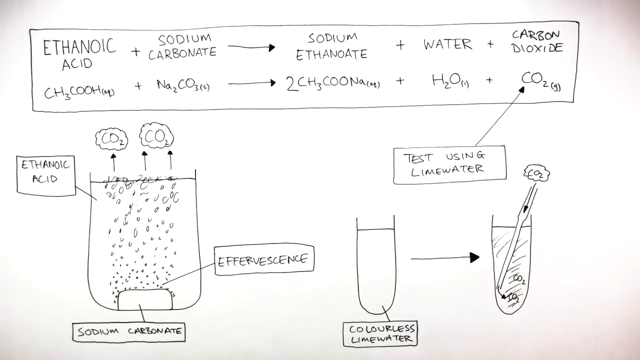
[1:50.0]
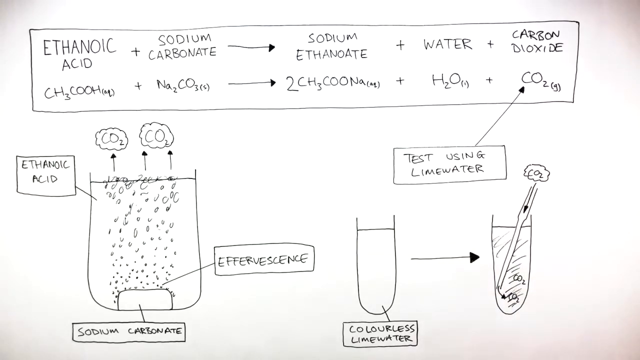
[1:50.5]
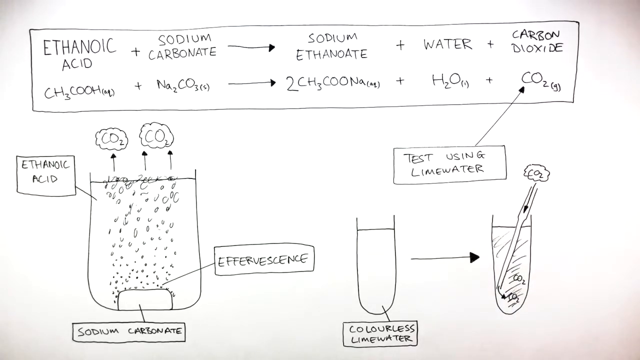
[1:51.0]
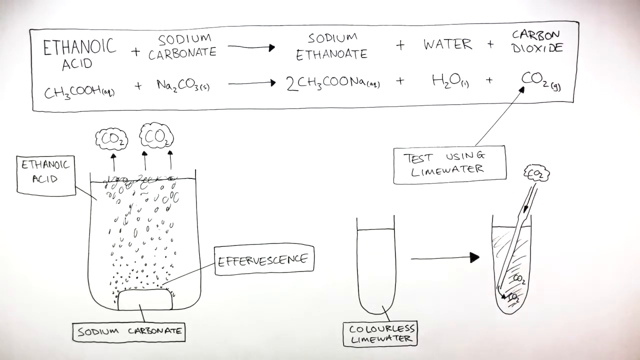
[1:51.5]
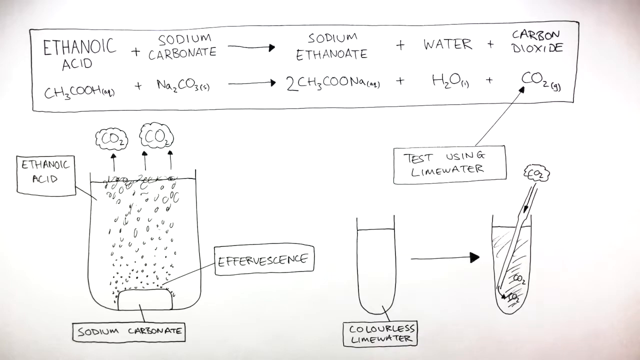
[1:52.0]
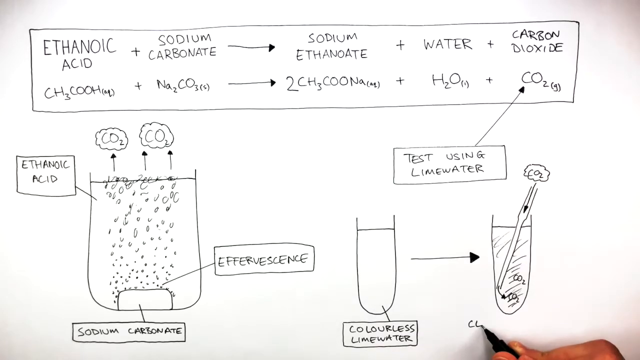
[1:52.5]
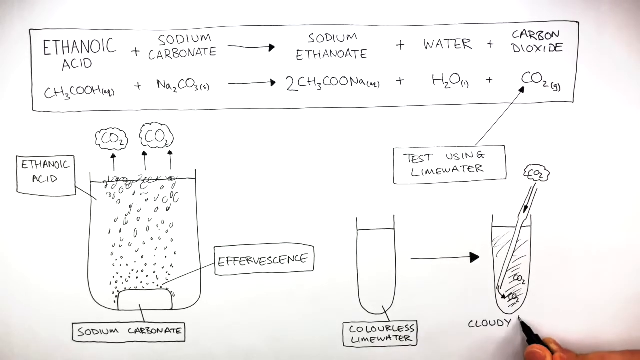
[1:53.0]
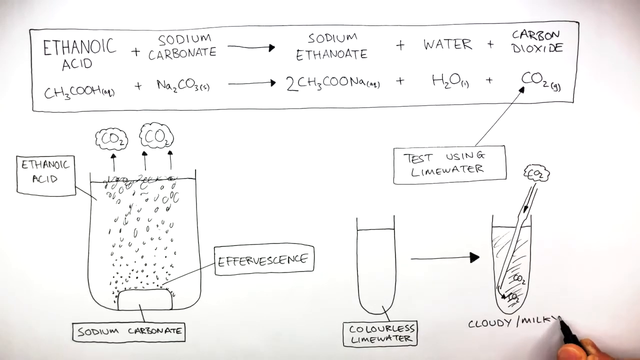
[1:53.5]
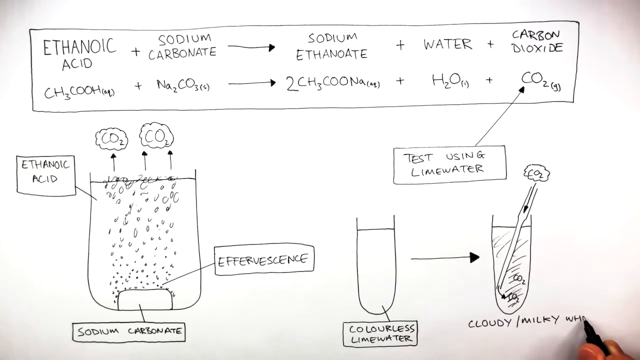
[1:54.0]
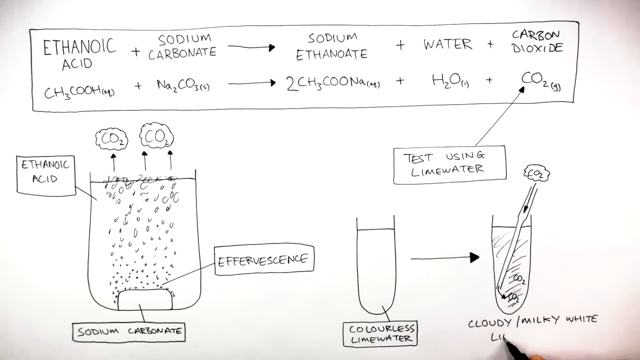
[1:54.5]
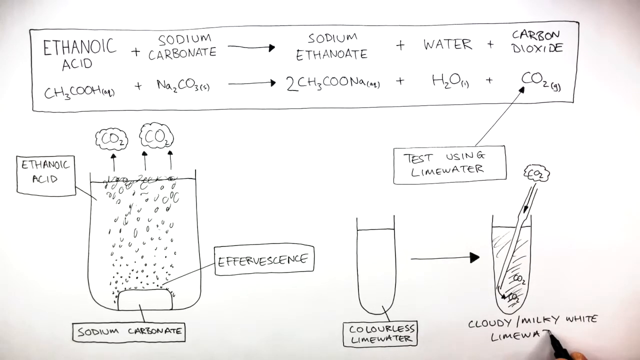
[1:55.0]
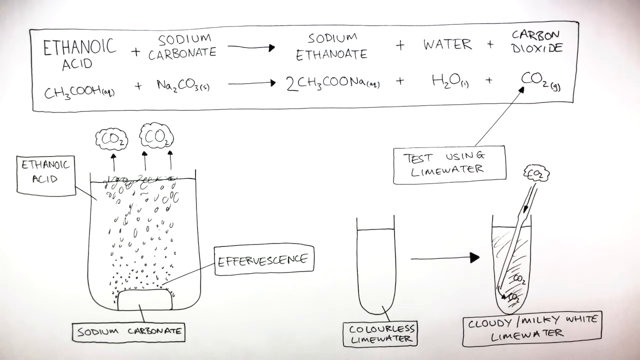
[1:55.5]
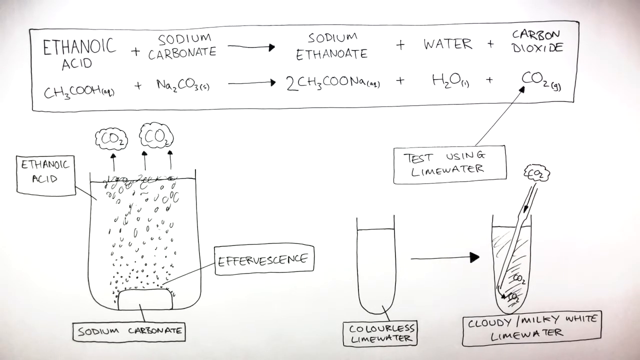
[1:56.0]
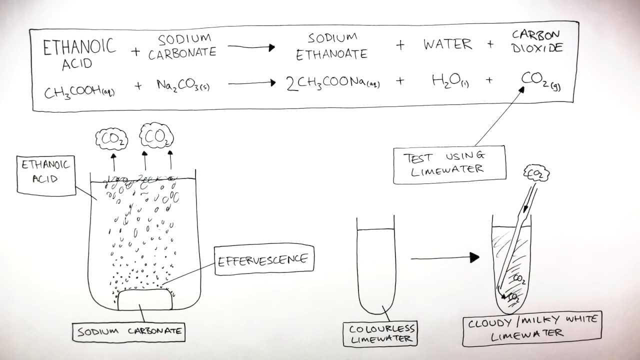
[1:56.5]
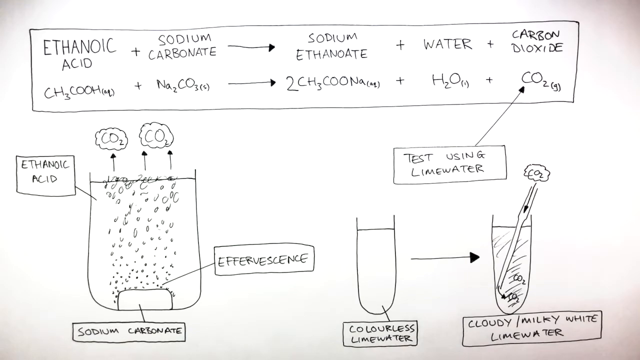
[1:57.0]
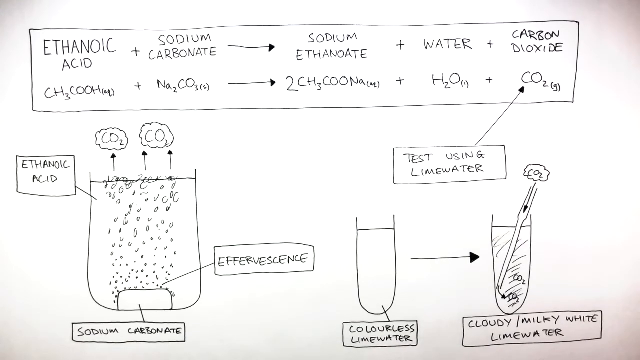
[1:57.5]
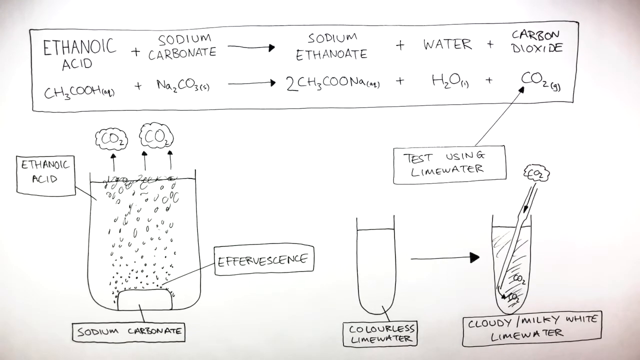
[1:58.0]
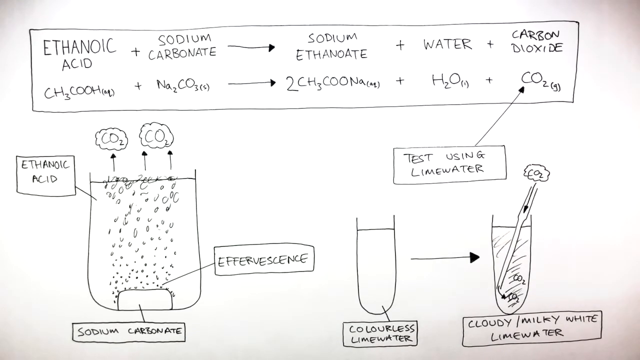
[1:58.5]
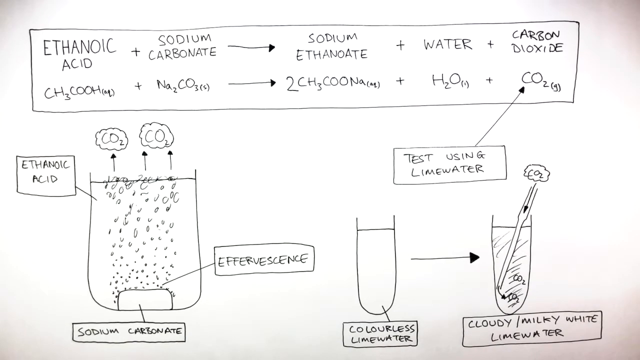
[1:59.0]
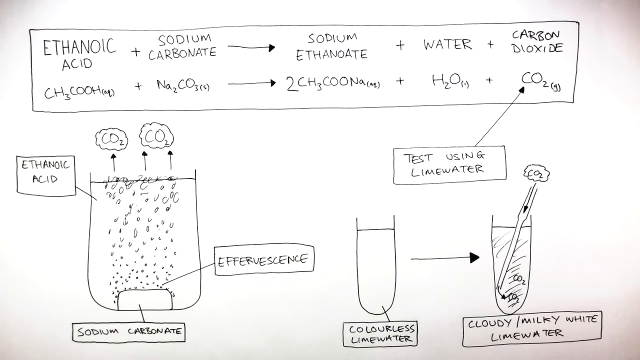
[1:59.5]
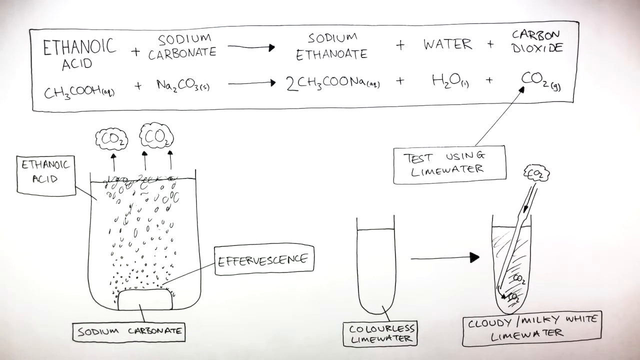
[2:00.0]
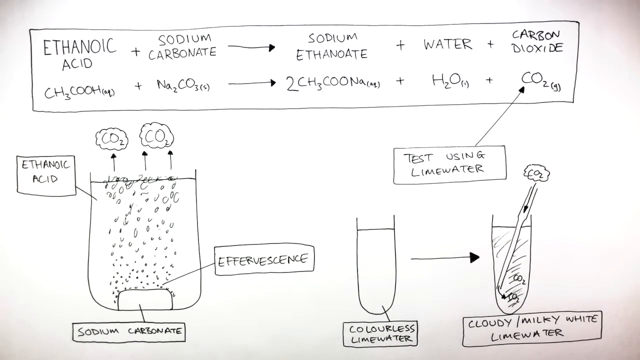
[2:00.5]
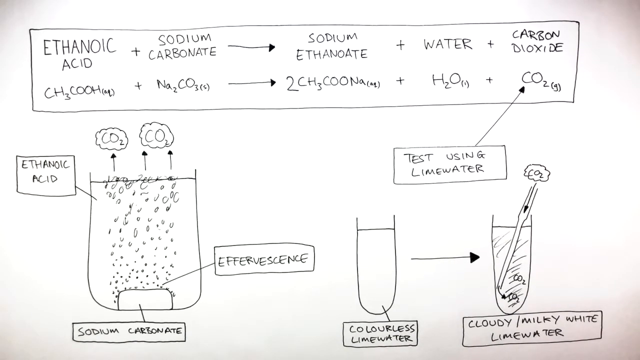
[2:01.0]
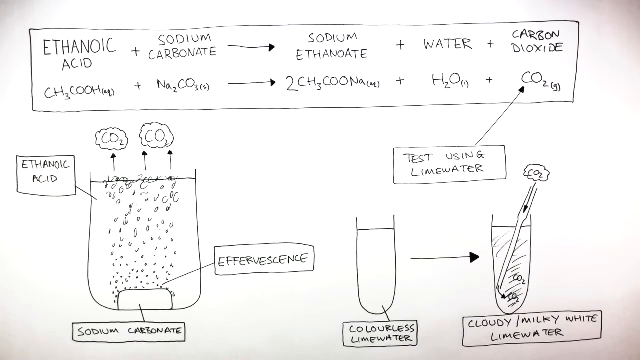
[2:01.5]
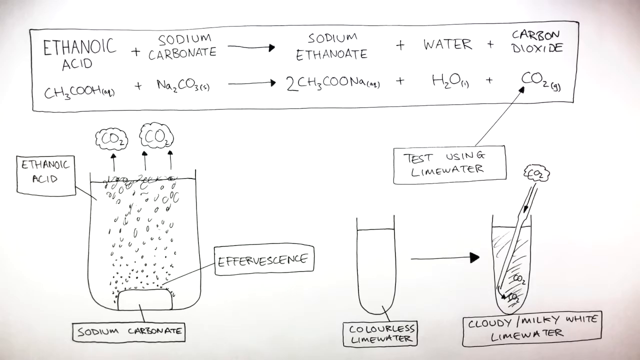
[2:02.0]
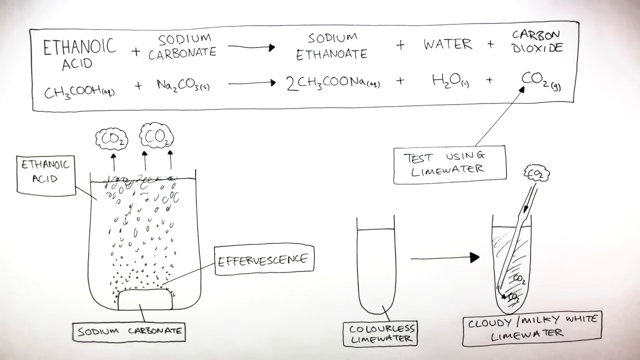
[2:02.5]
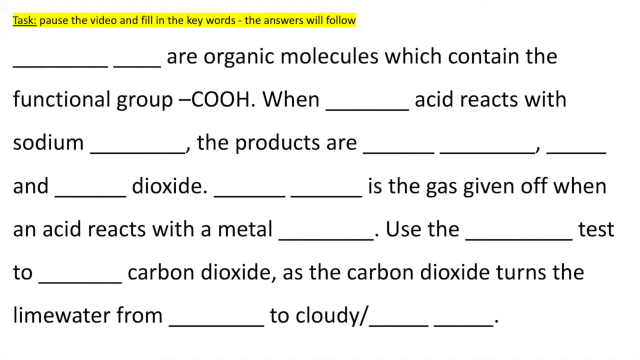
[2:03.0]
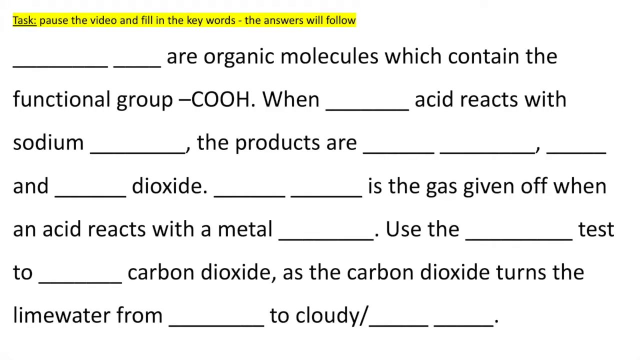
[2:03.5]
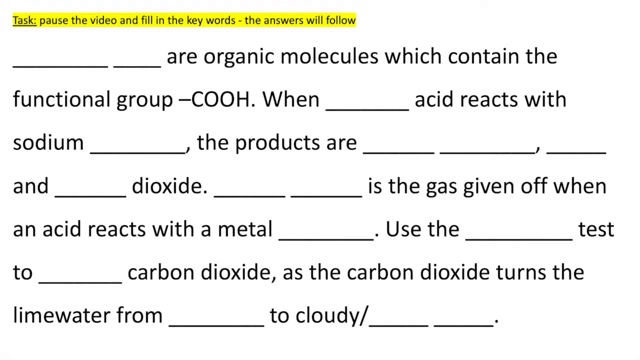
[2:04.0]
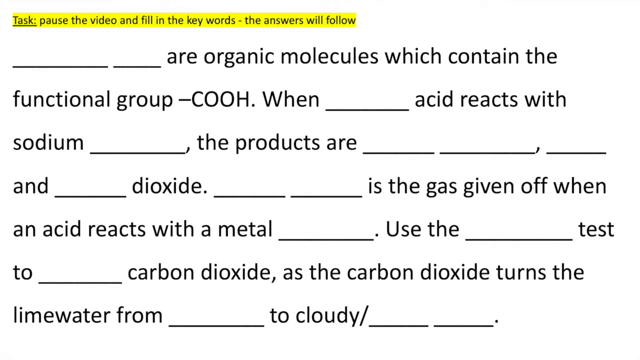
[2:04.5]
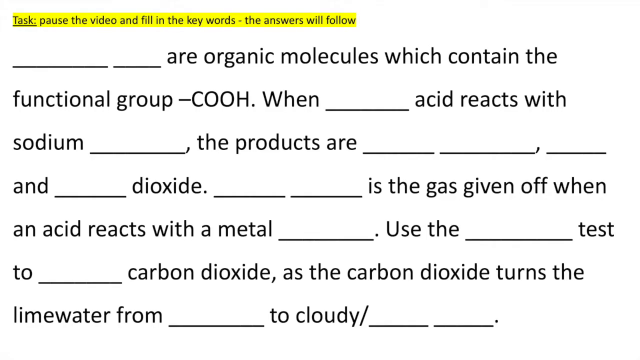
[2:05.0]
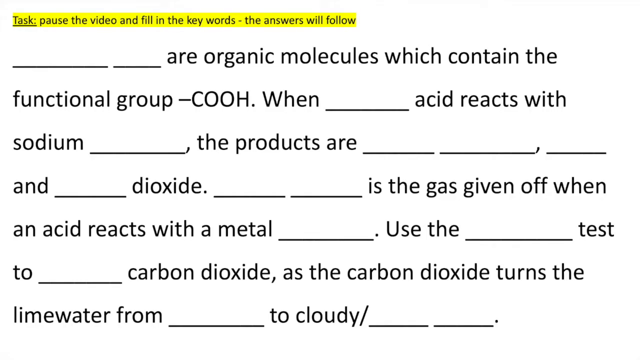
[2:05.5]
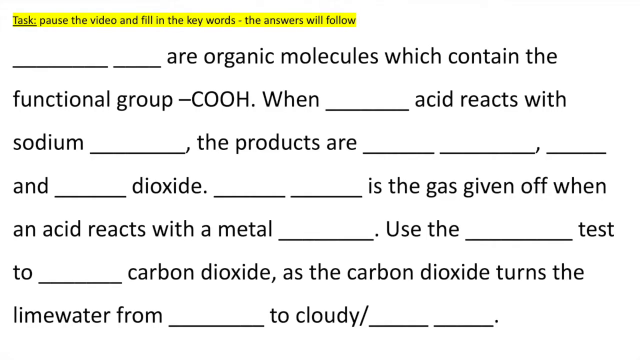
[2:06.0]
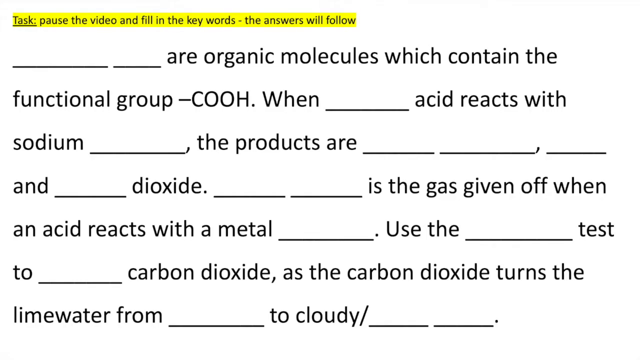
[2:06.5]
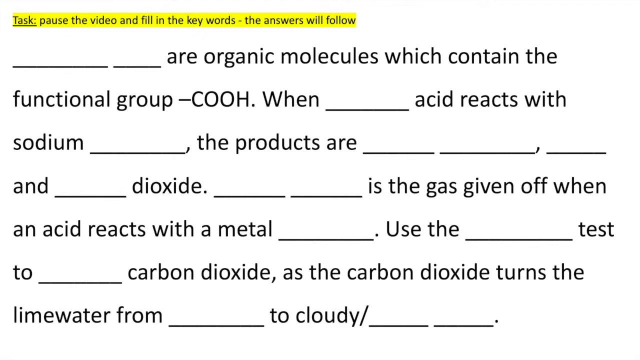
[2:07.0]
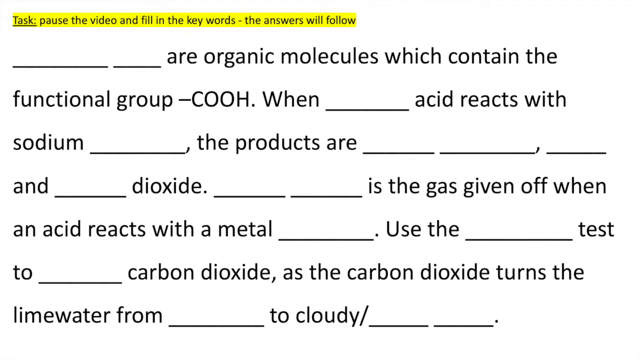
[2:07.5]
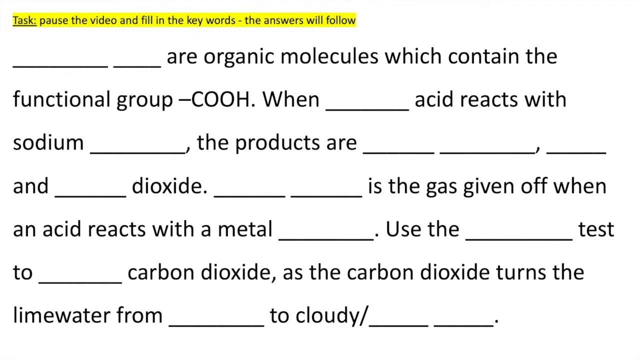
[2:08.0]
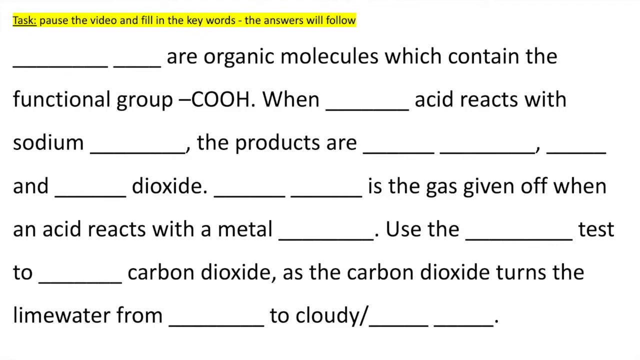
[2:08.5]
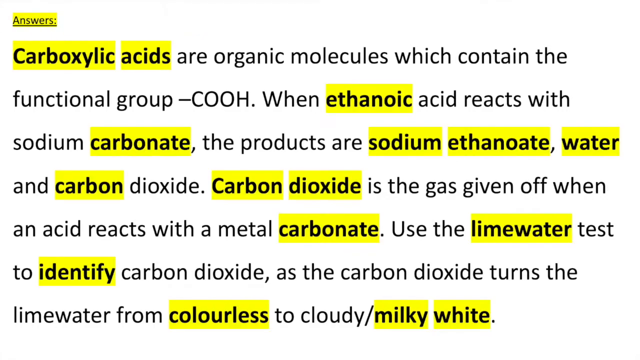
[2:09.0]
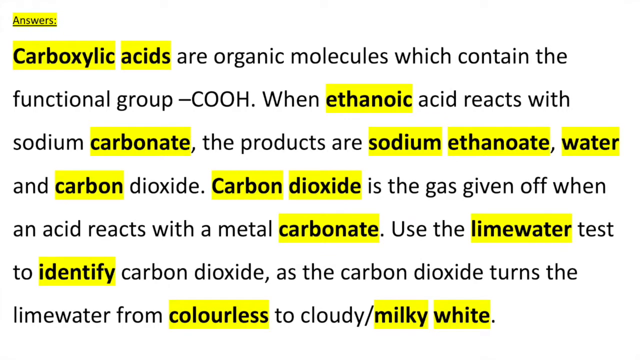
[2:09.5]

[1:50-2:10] The person writes that the test tube on the right-hand side of the lime water test drawing turns "cloudy milky white". The colourless lime water in one test tube receives CO2 through an item placed into the test tube; the CO2 seems to pass through it, suggesting it might be a straw rather than a stick, through which CO2 is blown into the solution, changing it from colourless to cloudy or milky white. The person indicates this by drawing lines over the liquid portion of the second test tube. The video then transitions to text with blank spaces, meant for pausing the video and filling in the keywords. It reads: "___ ___ are organic molecules which contain the functional group COOH. When ___ reacts with sodium ___, the products are ___ ___ and ___ dioxide. ___ ___ is the gas given off when an acid reacts with a metal ___. Use the ___ test to ___ carbon dioxide as the carbon dioxide turns the lime water from ___ to cloudy / ___ ___." Each blank is a space where the viewer would fill in the missing words.